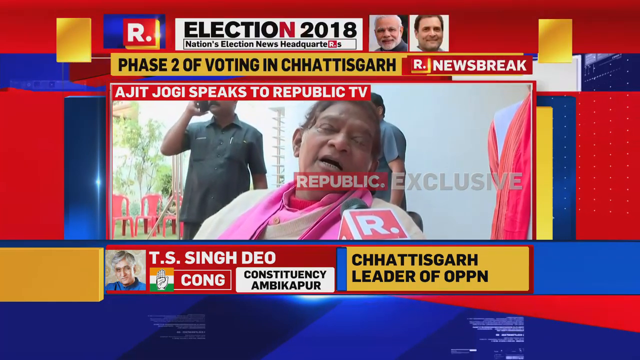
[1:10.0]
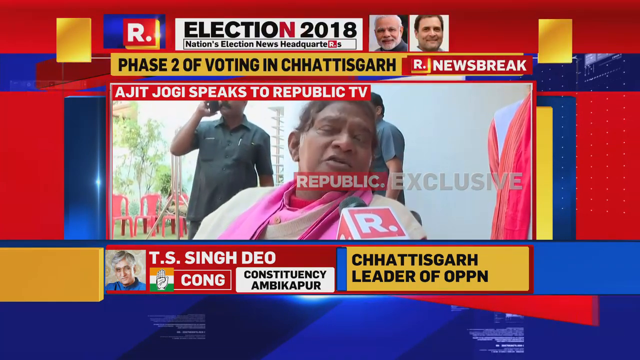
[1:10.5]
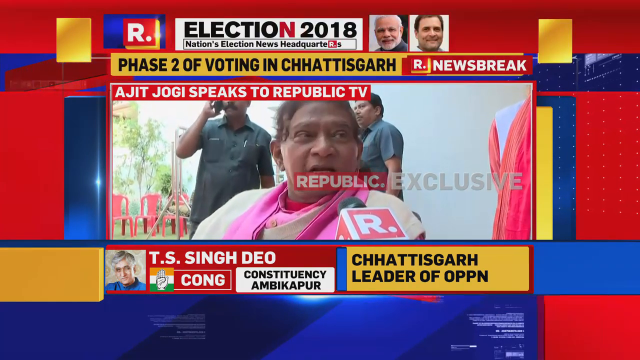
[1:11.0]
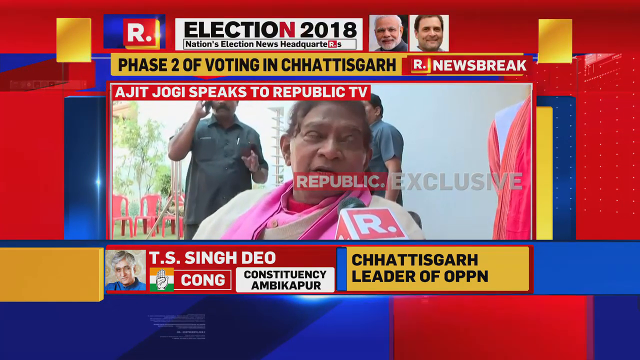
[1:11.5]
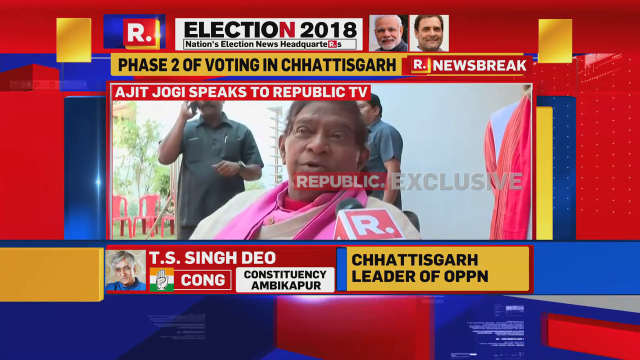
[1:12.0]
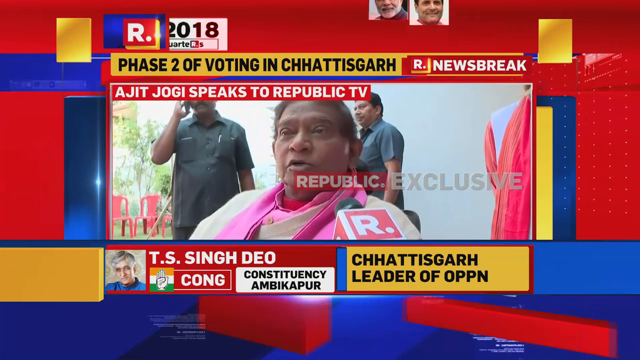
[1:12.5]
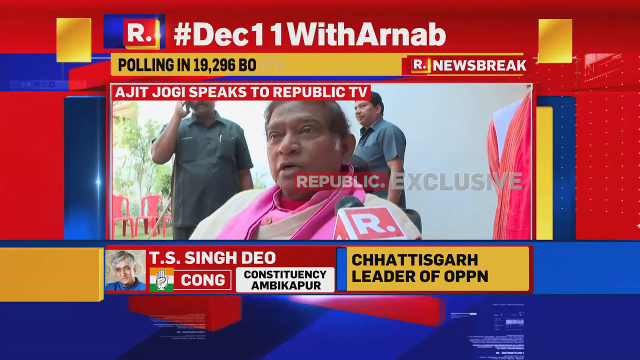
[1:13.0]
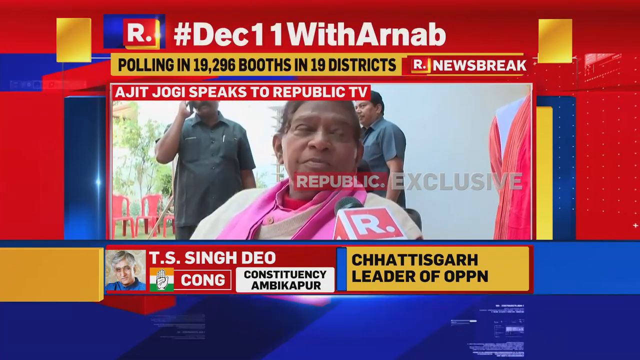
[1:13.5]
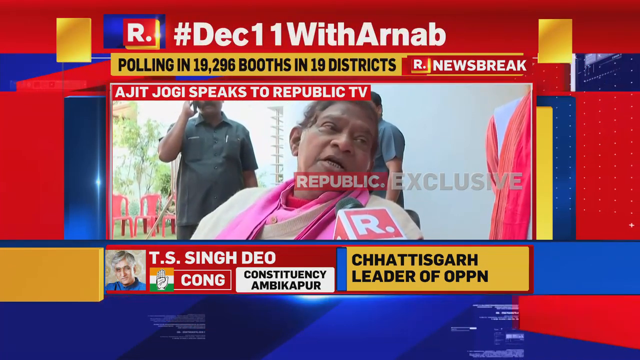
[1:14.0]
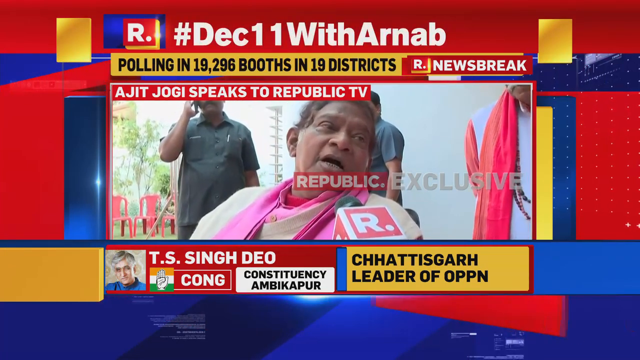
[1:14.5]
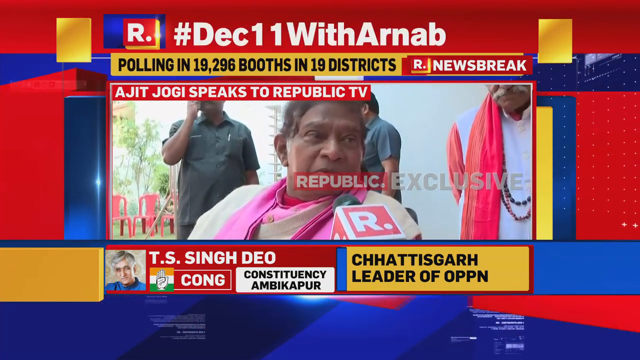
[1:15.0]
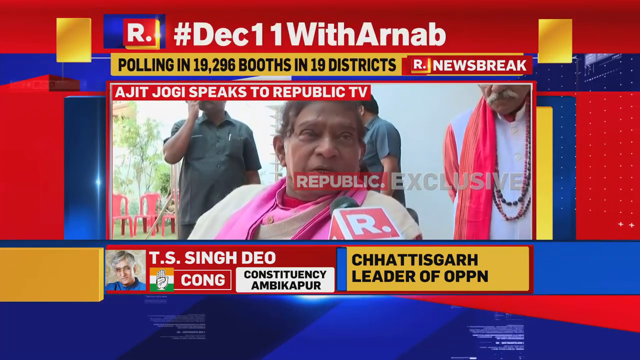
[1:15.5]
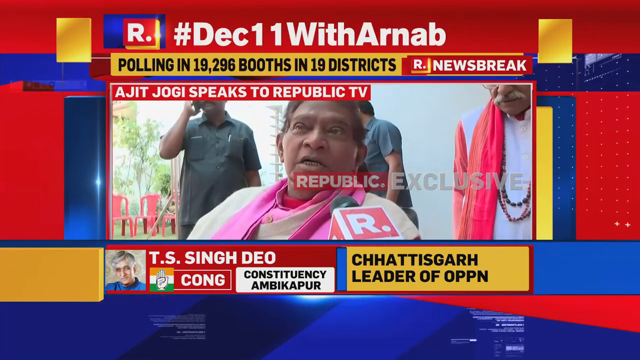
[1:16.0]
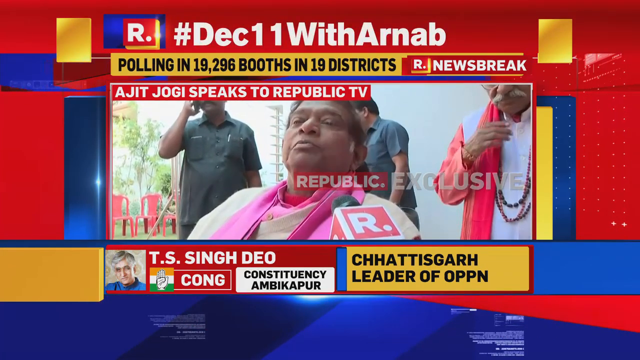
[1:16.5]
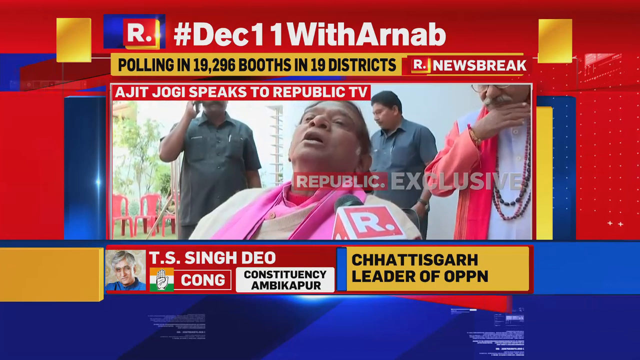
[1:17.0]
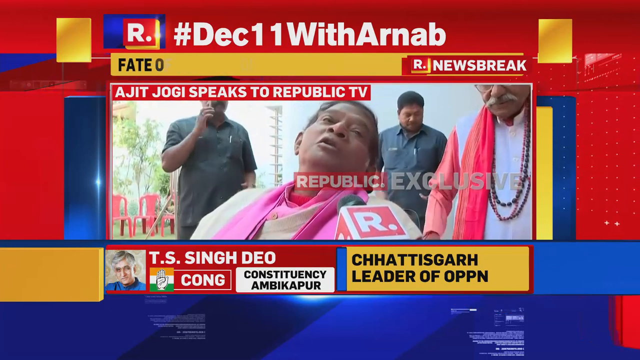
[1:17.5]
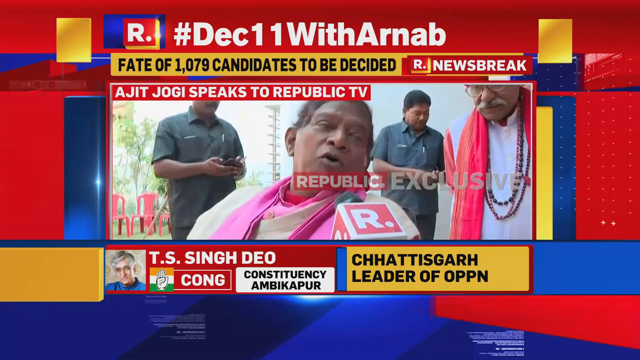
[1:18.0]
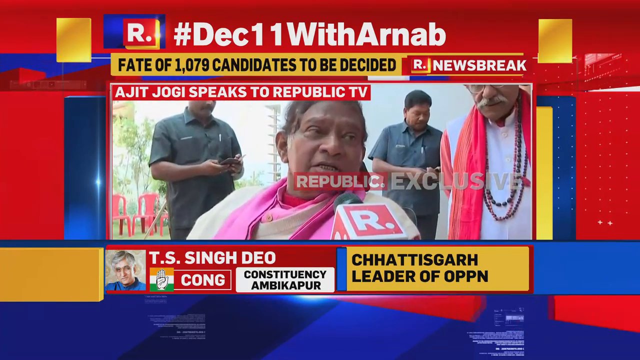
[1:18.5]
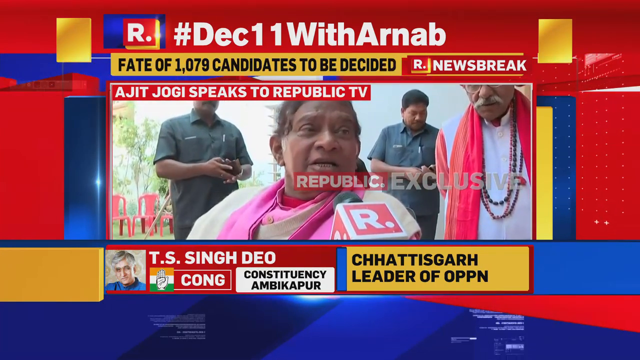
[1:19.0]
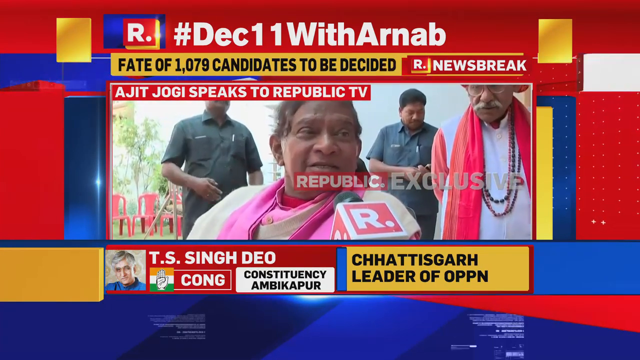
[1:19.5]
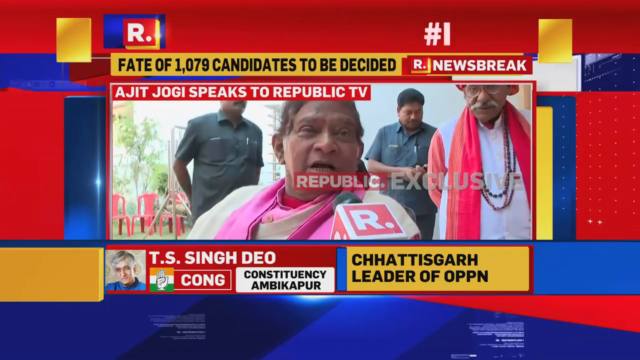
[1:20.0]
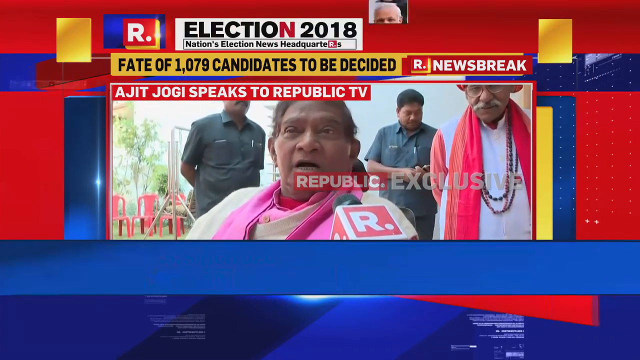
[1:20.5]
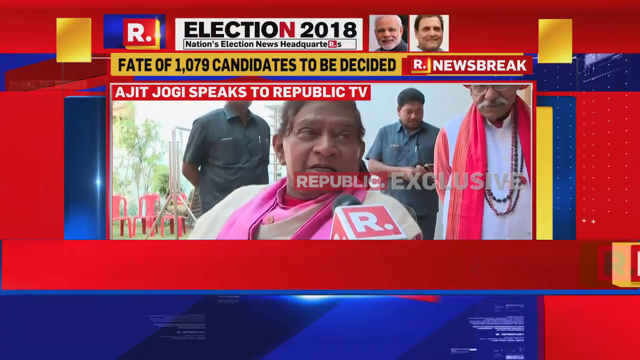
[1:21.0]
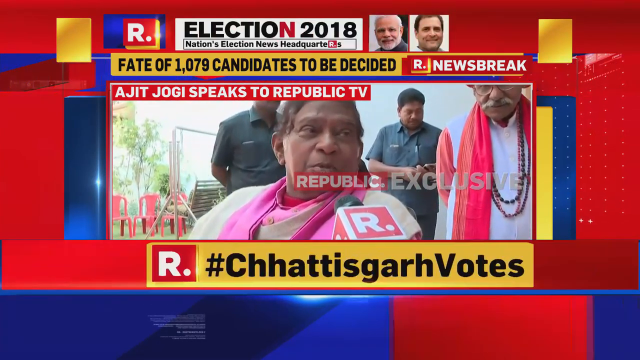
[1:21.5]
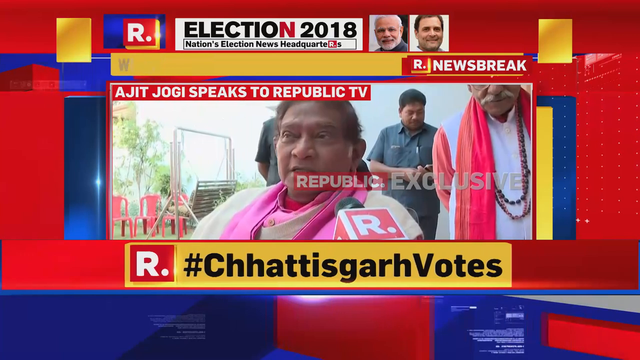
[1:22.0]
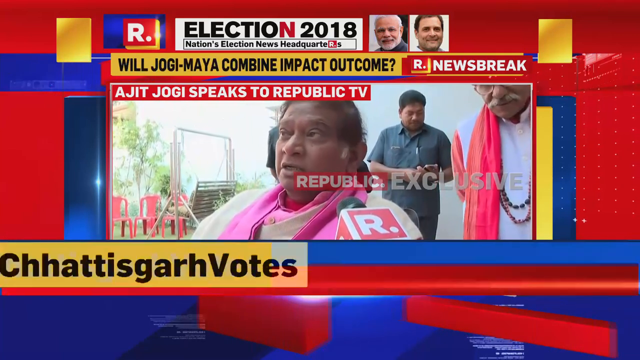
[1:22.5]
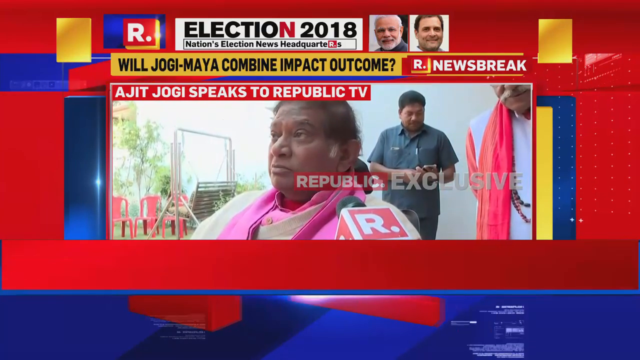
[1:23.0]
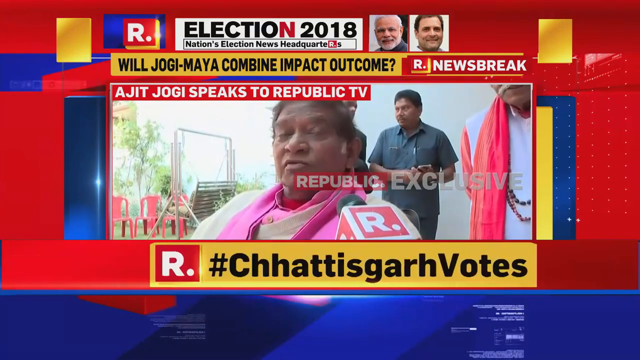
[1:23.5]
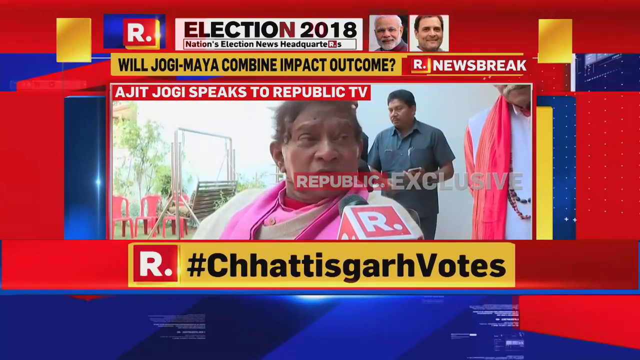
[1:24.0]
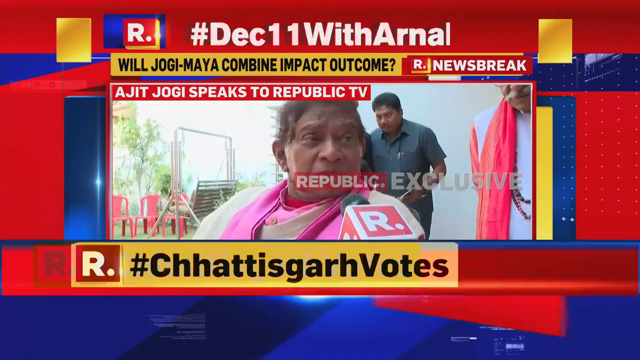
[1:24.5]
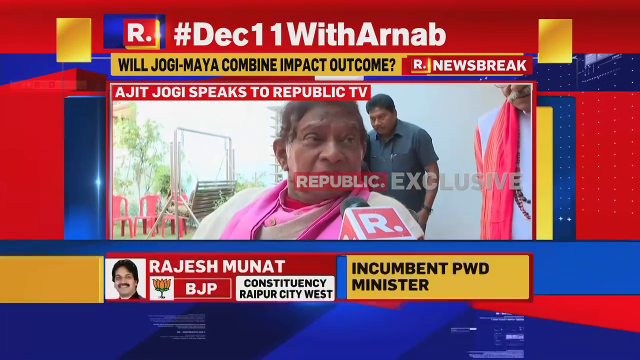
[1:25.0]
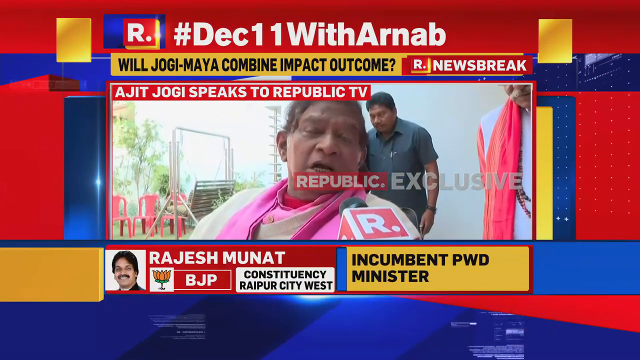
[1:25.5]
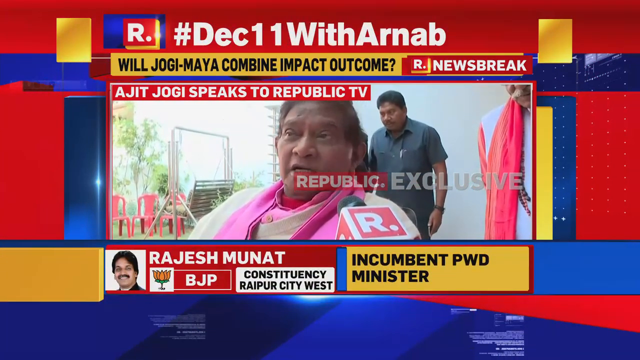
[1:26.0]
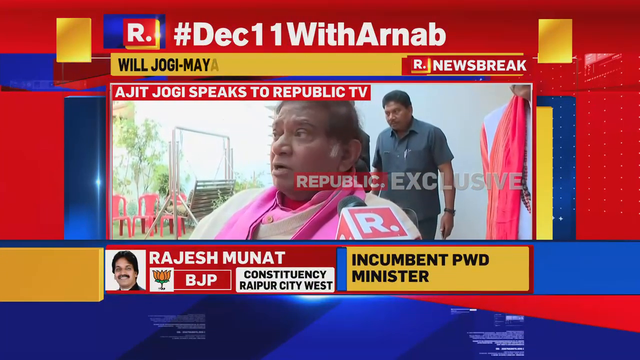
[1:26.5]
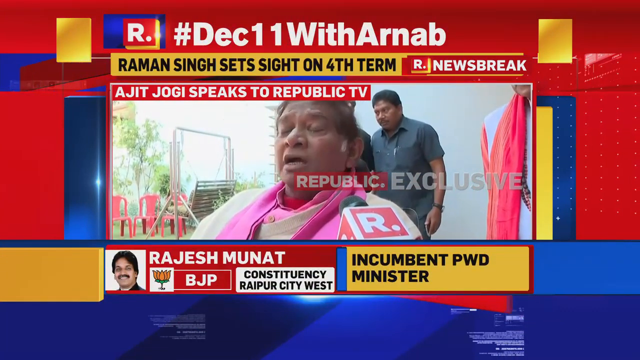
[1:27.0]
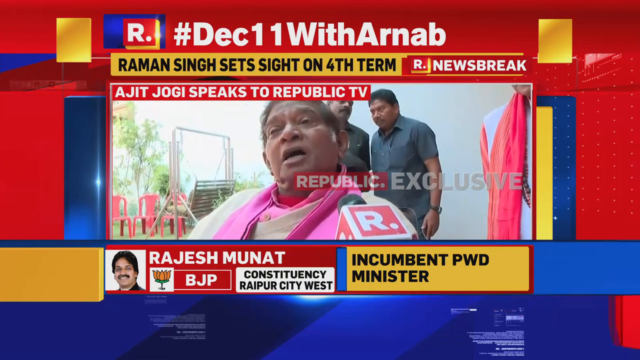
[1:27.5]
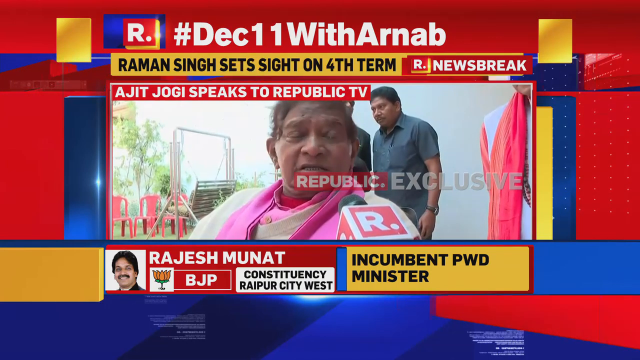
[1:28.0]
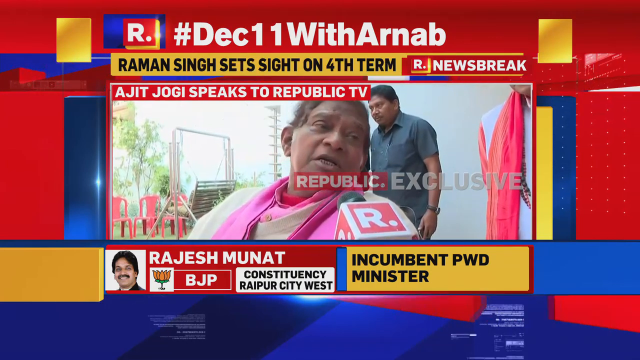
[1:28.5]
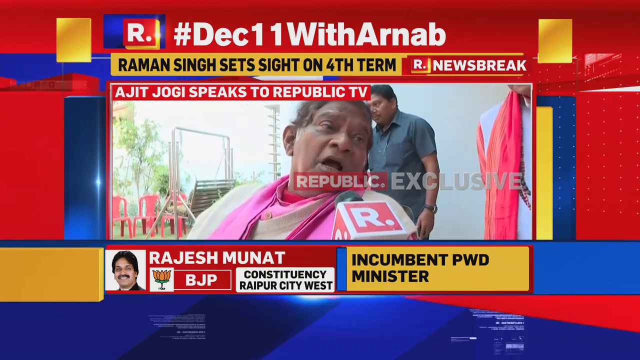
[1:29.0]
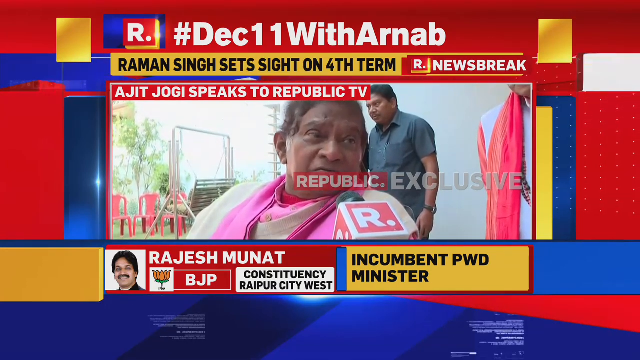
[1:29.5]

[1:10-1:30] The yellow text box at the top says, in black, "phase two of voting in Chhattisgarh", then switches to "polling in 19,296 booths in 19 districts", then "fate of 1079 candidates to be decided", then "will Jogi Maya combine impact outcome", and then "Ramon Singh sets sight on fourth term", apparently continuing the same headlines shown earlier, possibly on a loop. Over the interview with the woman in the pink scarf, a watermark around her chin area reads "Republic exclusive". There are a couple of people in the background of the interview: a couple of men dressed in dark utility or work shirts, and, on the right, an older man with long beads, a white mustache, a red scarf and a white shirt, who is kind of walking around and standing on the right. The bottom graphic changes: a yellow text box comes in, takes up the whole bottom, and says "#Chhattisgarh votes", with the R logo on the left. Then a new person appears.